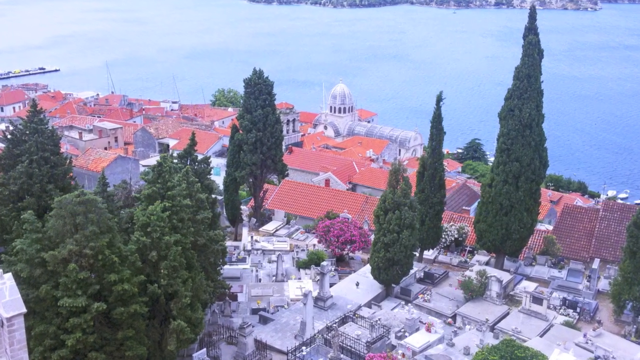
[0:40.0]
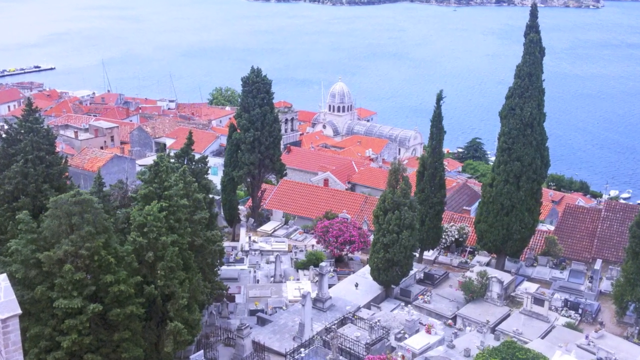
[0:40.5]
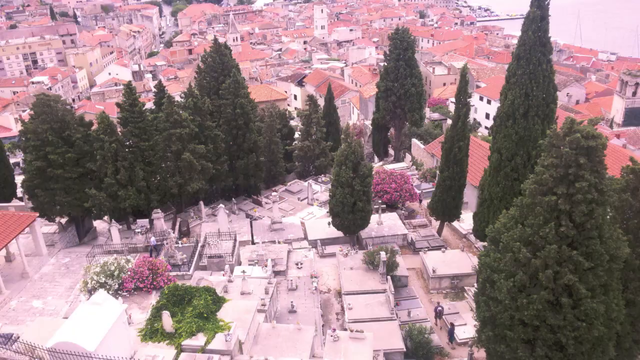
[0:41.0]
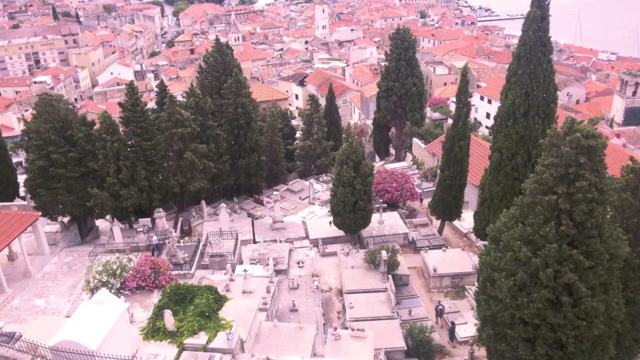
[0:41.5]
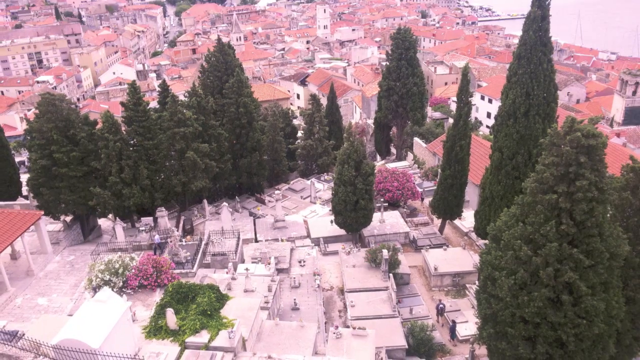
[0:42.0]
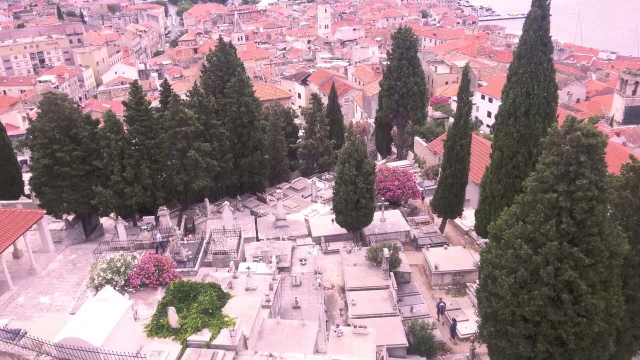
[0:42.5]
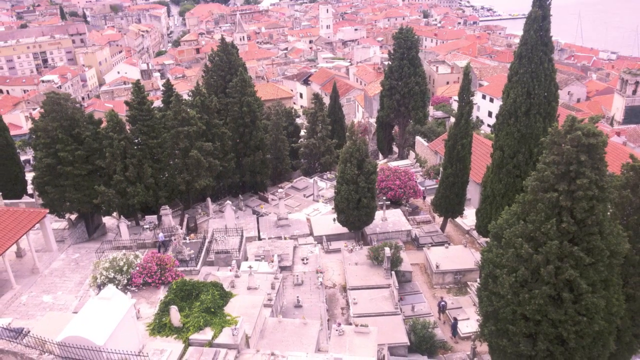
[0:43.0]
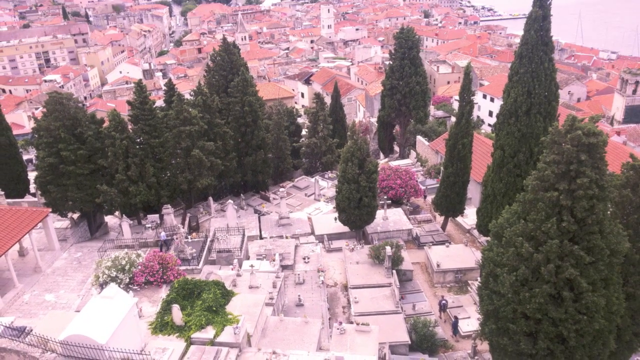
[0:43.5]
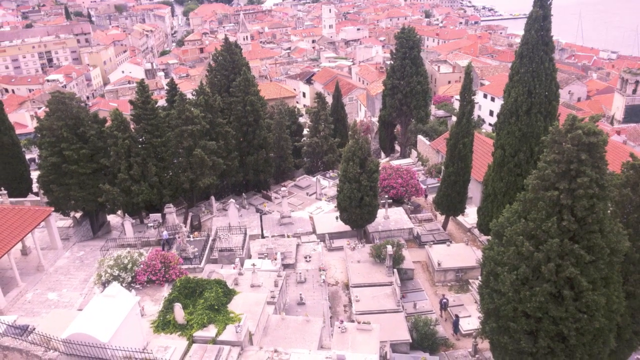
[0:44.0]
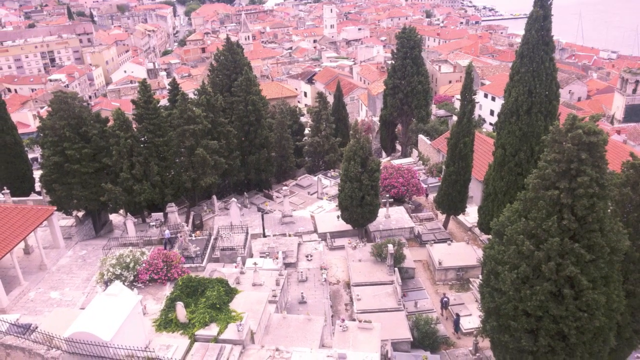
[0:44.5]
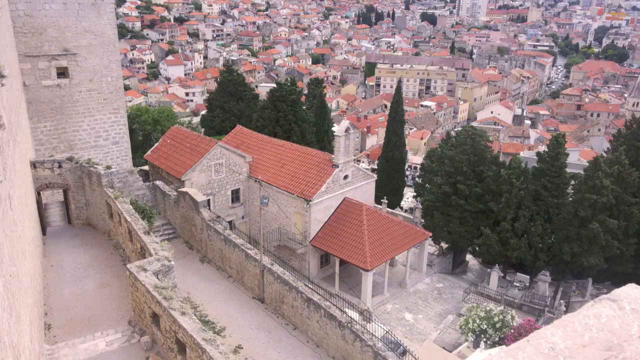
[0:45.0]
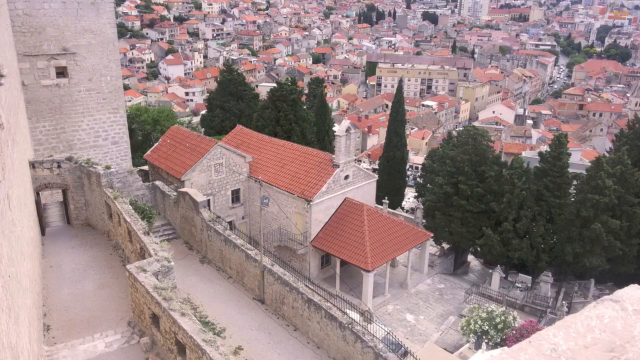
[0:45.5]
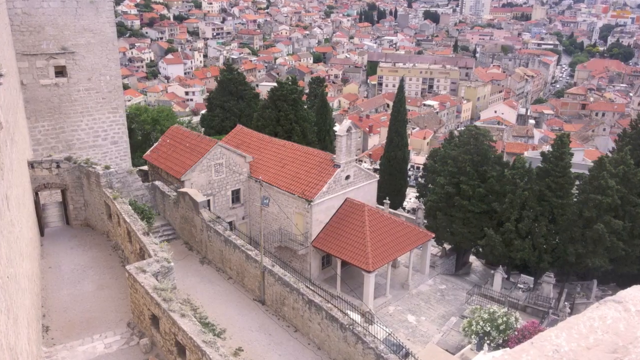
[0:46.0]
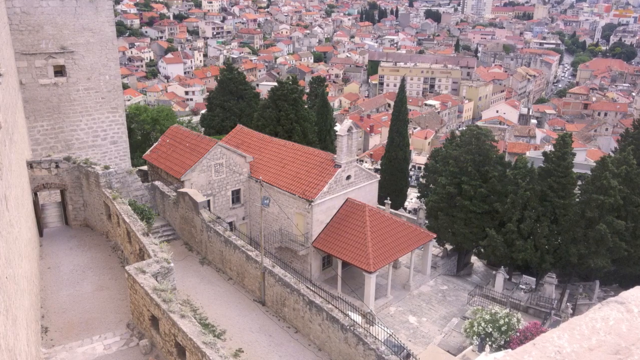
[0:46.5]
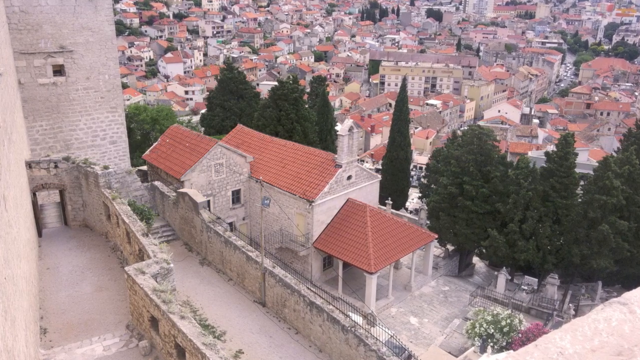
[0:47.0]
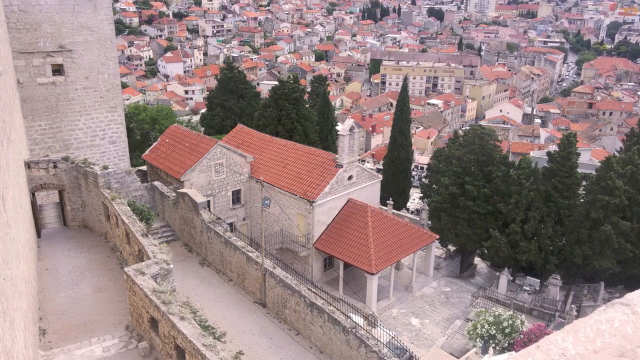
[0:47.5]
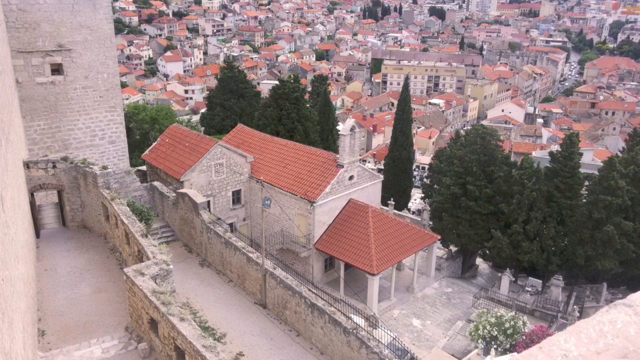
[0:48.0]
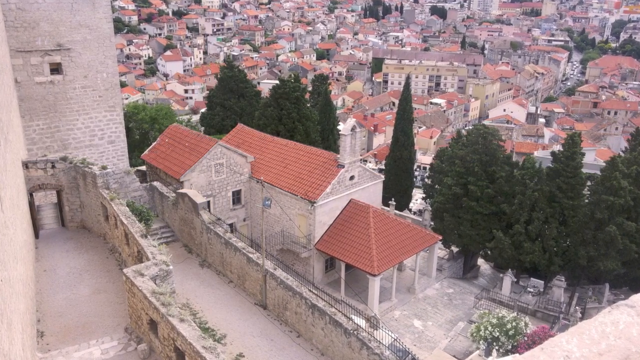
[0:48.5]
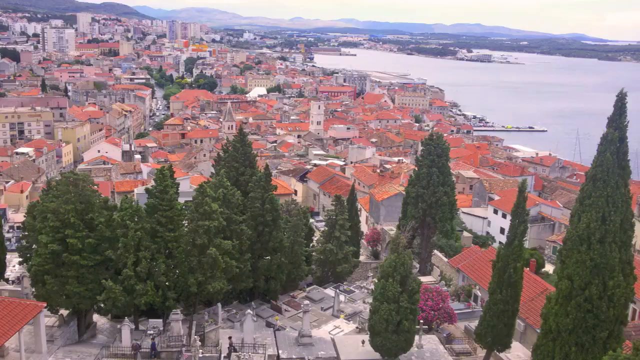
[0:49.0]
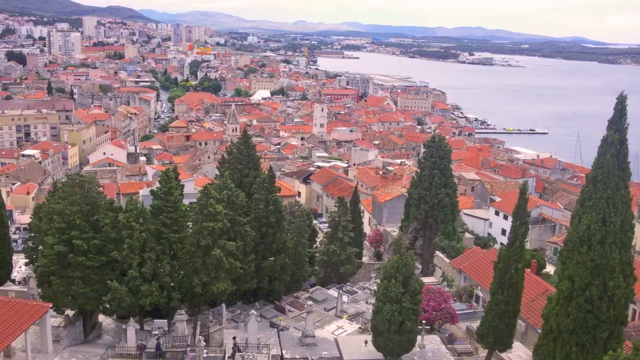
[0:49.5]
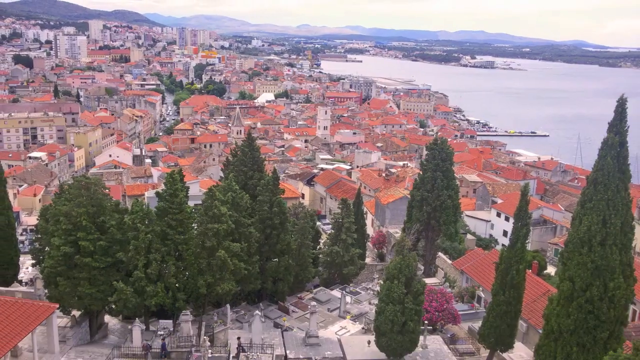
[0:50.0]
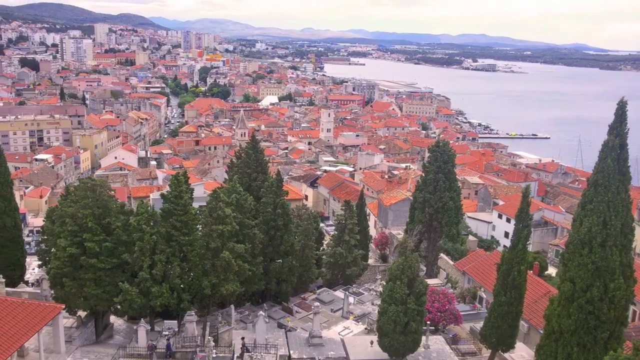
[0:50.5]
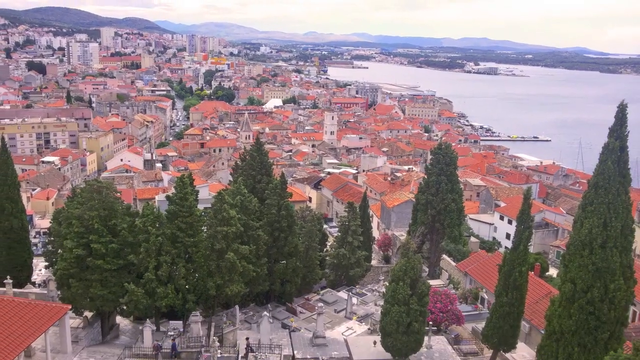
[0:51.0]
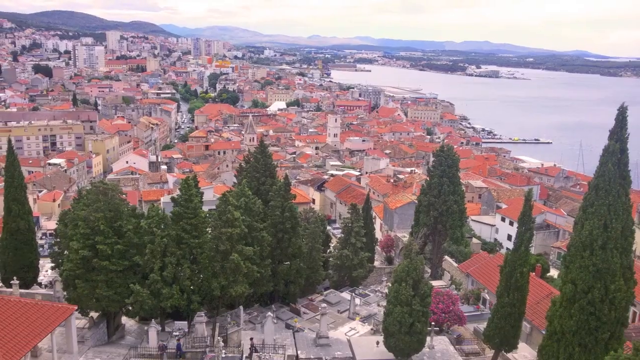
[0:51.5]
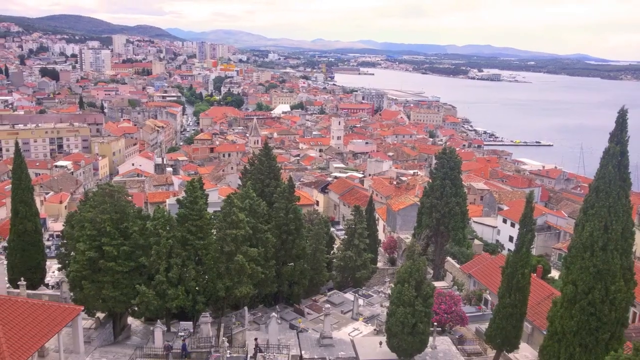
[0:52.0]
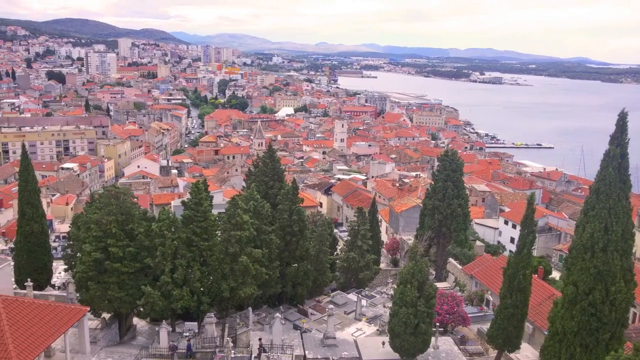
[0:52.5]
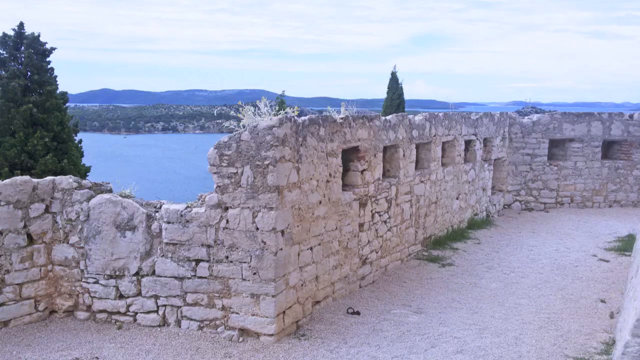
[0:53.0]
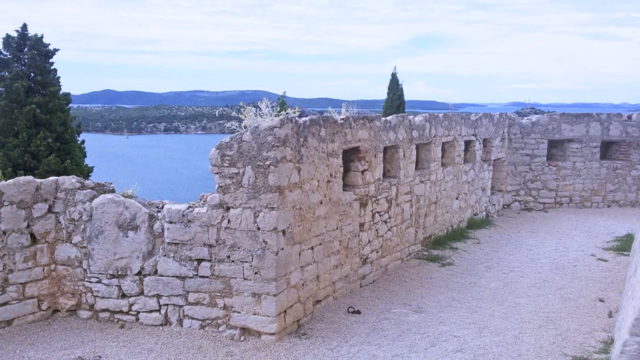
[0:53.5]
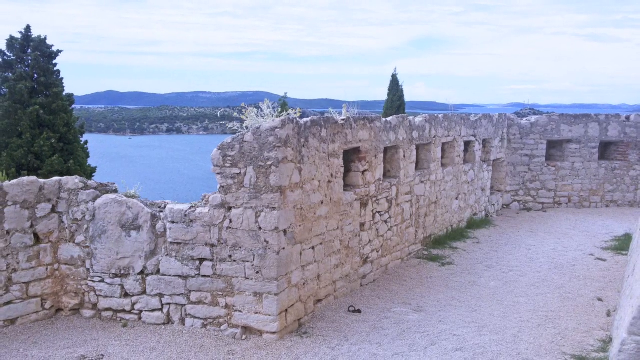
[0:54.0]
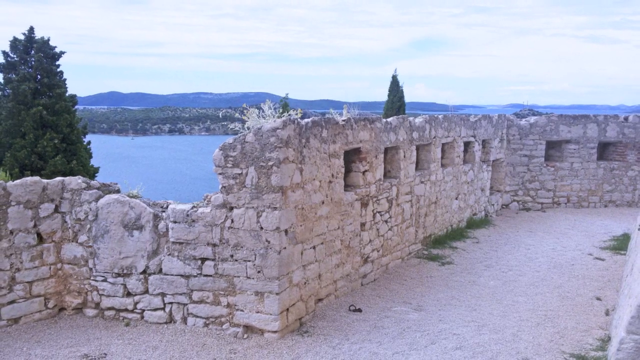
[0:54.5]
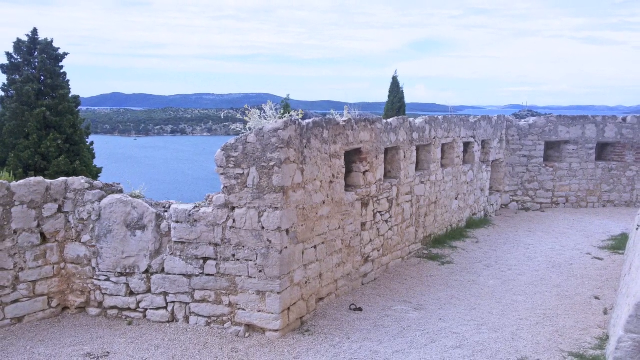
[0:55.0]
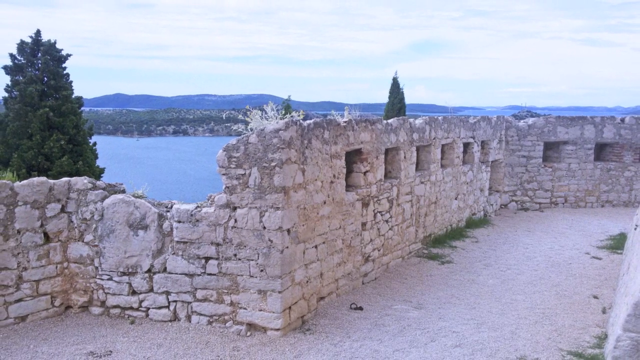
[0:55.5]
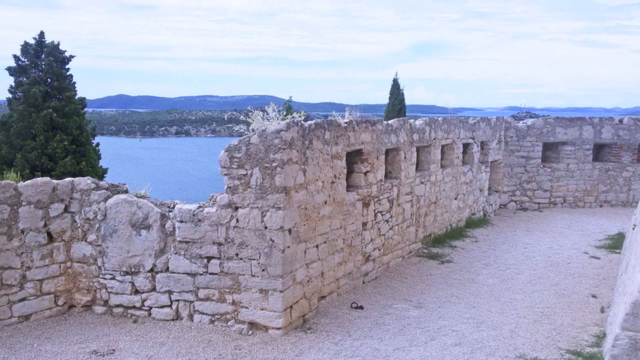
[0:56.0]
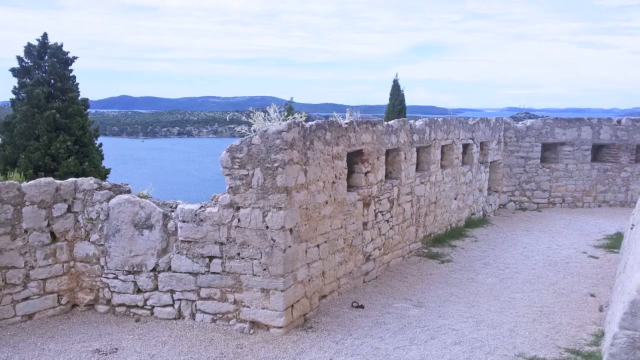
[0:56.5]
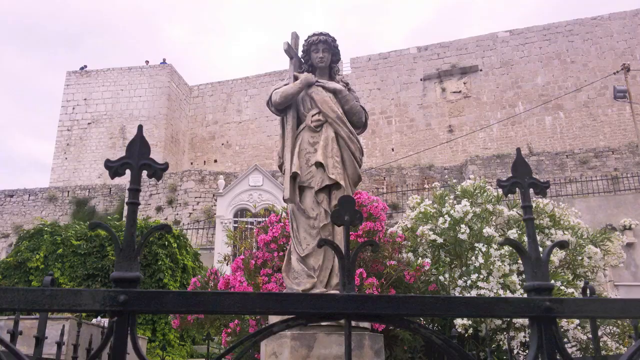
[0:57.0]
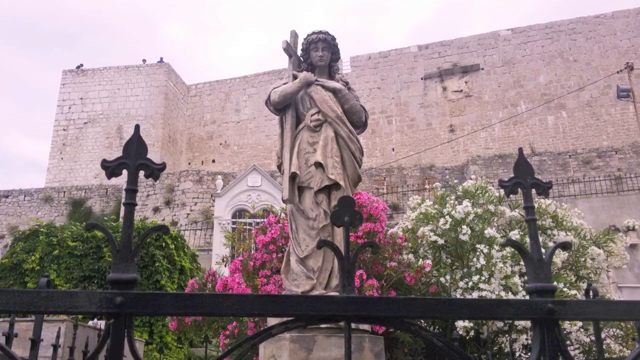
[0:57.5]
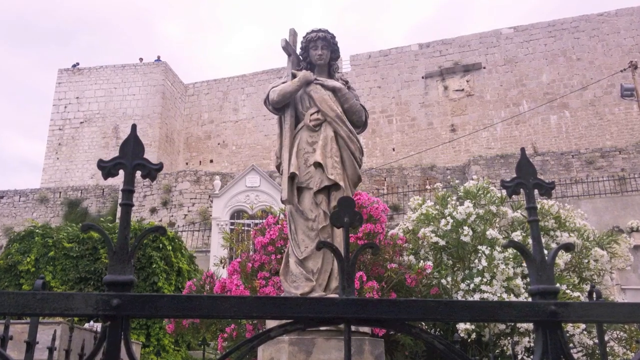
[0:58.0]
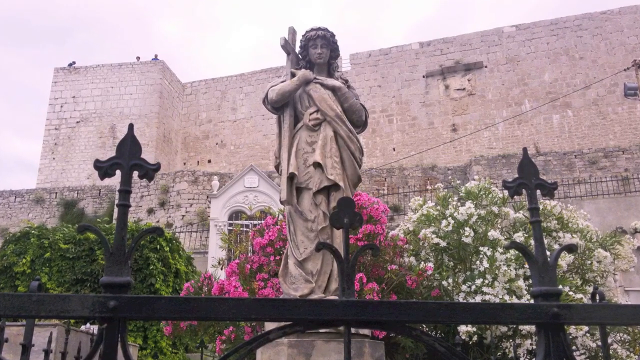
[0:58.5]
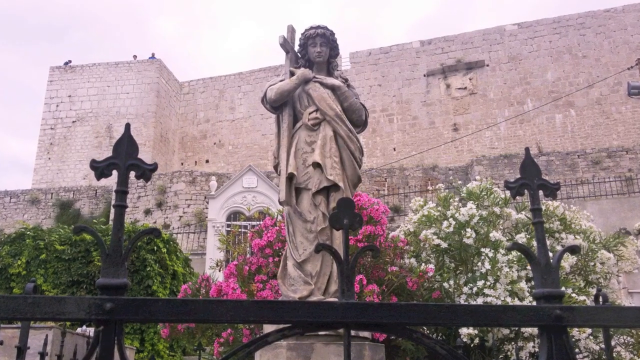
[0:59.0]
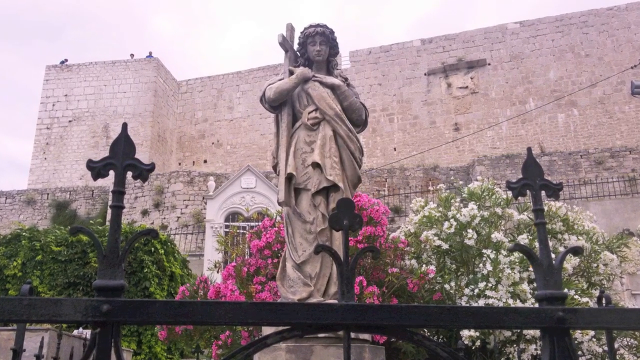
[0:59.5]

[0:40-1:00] The view looks down from up high at a whole bunch of houses with some trees mixed in between them, mostly showing their rooftops. It transitions to another image: on the left-hand side is the edge of one of the houses, and beyond it is the remainder of a large group of houses in a village or town, with some trees; most of the houses have orange roofs. Next is the lakeside or oceanside town with houses on the left, trees up front, and the edge of the bay, lake or ocean in the background. The video then shows a spot almost at the edge of a brick building that is a little decayed and broken down; beyond the brick, in the background, are some trees and the ocean or bay. It then transitions to what looks like a statue of a woman in a robe holding a cross, with a white building behind her and green, pink and white flowers beside and behind her. The camera starts zooming in a little, and then the video appears to stop.